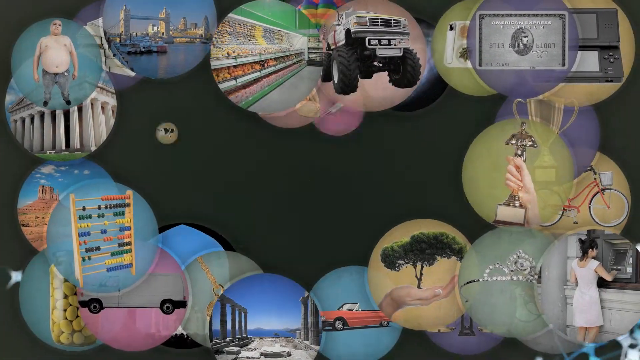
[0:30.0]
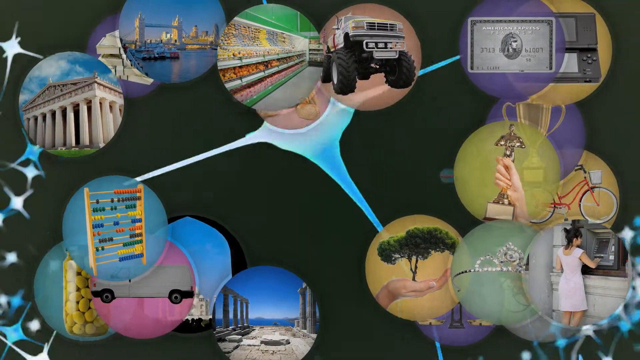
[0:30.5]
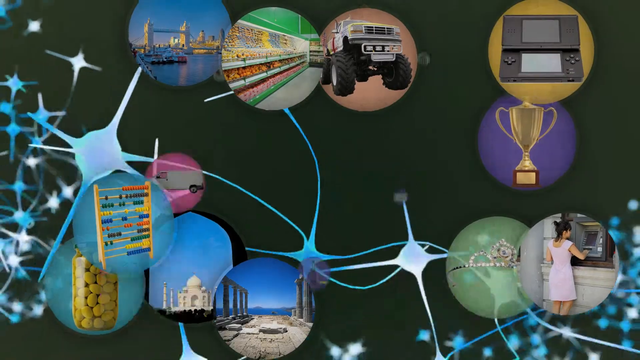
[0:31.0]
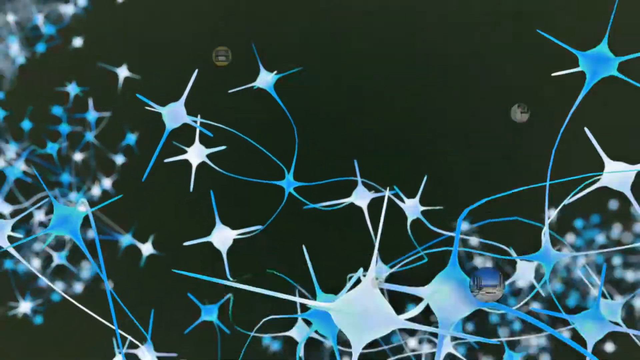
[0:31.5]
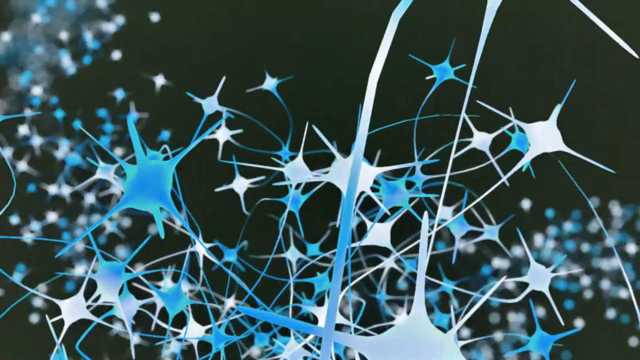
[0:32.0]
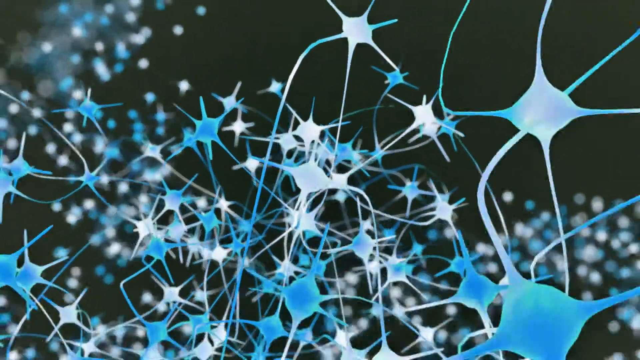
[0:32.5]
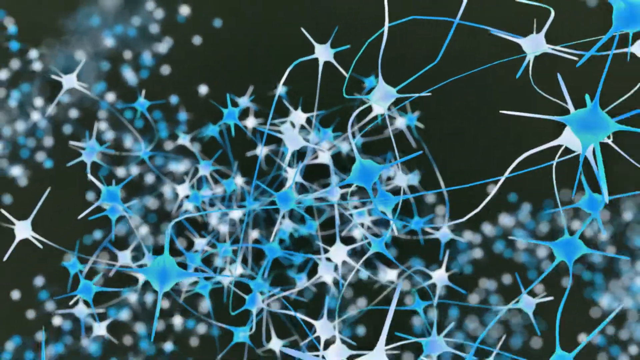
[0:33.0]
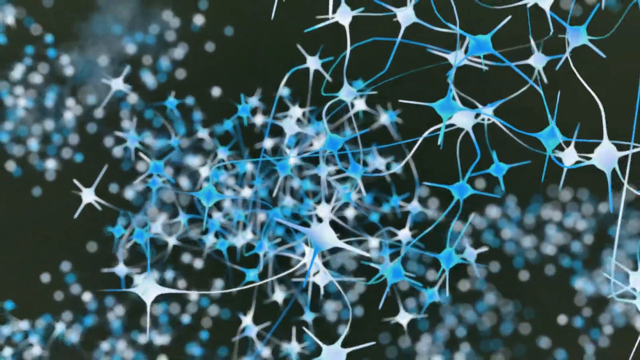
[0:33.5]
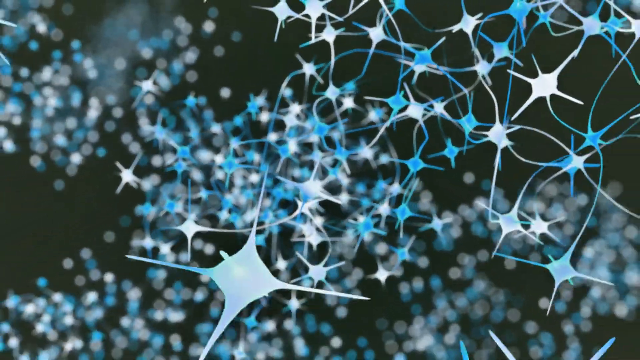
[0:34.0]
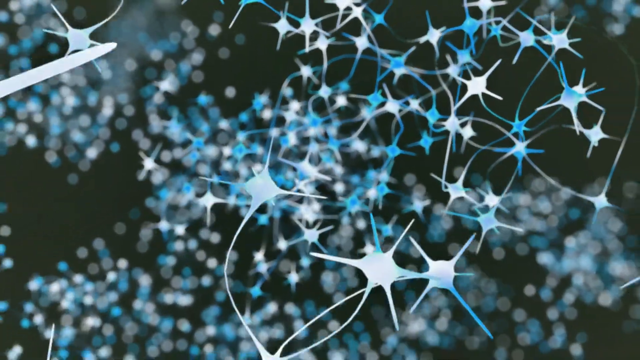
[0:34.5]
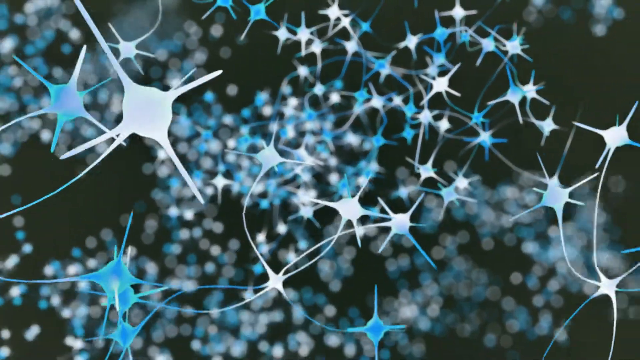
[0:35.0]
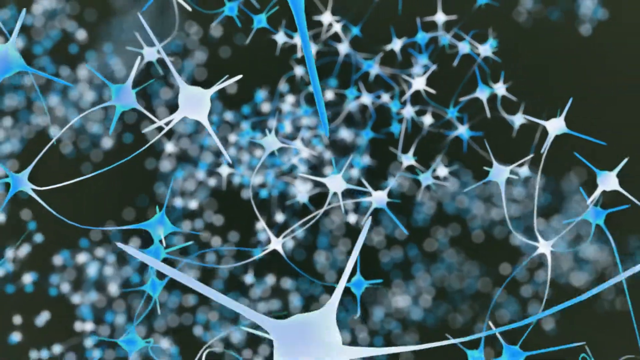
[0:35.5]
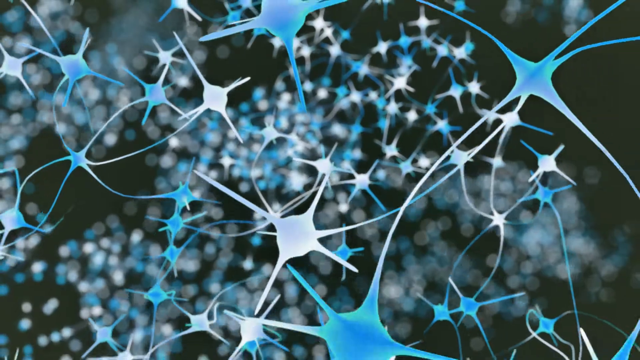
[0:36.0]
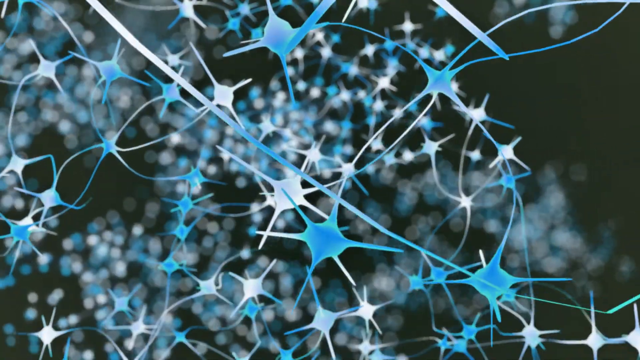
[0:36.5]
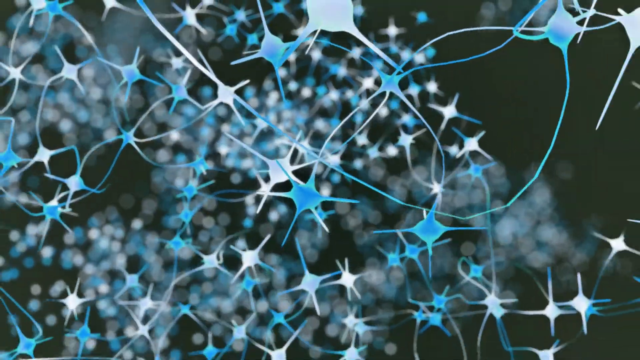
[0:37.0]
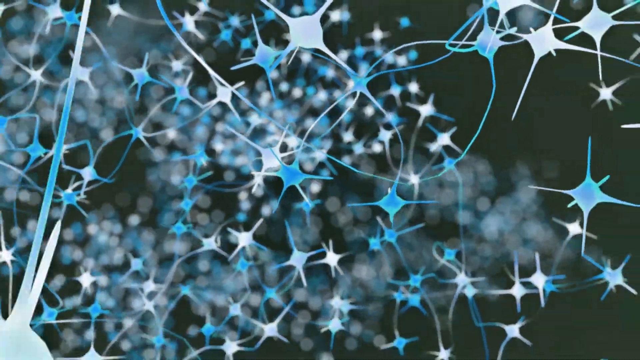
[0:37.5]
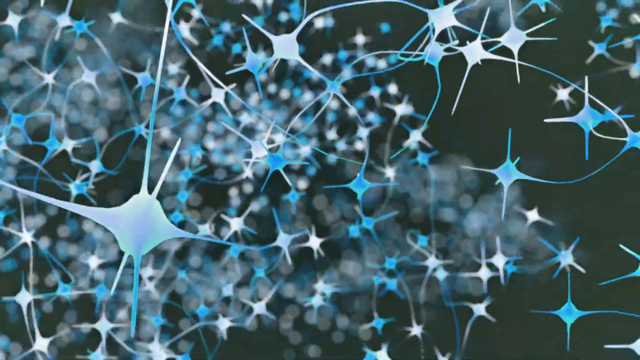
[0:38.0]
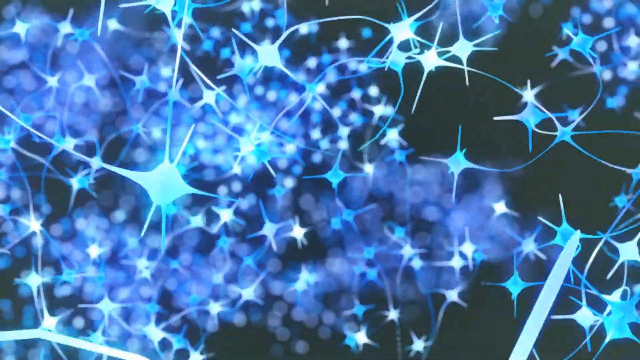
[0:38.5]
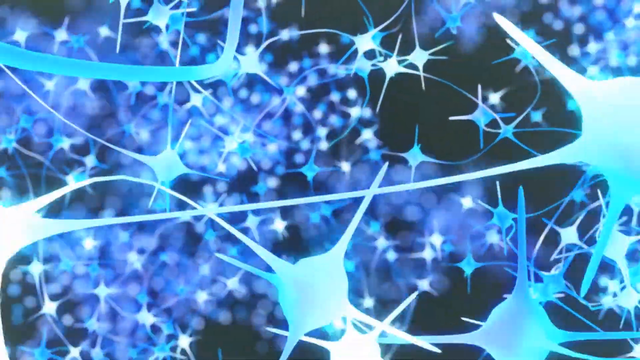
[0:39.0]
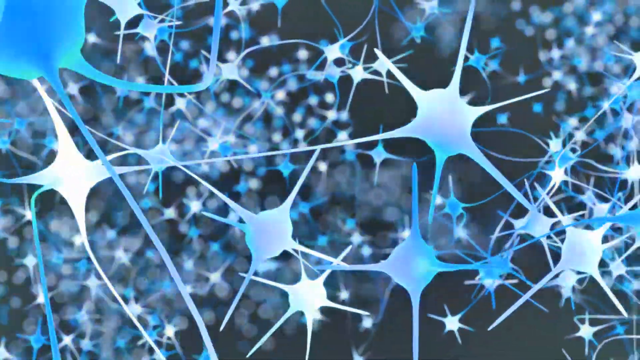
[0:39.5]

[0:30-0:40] The video shows the neurology and the different components of the brain, with ideas synced together. There is a lot of interwebbing and ideas, apparently within a brain, like a person's thoughts or feelings.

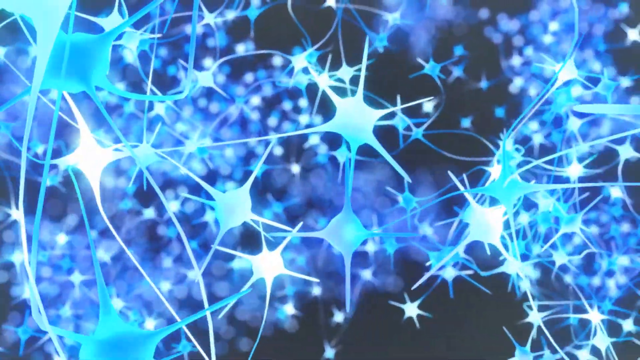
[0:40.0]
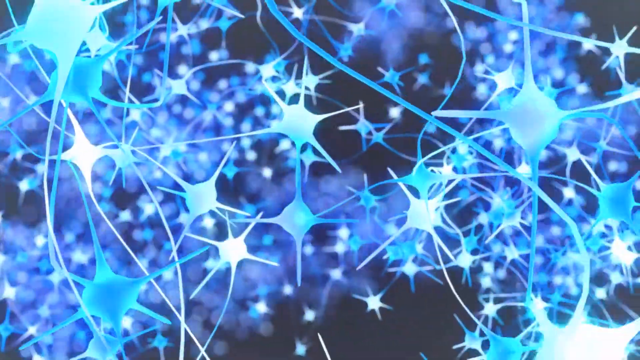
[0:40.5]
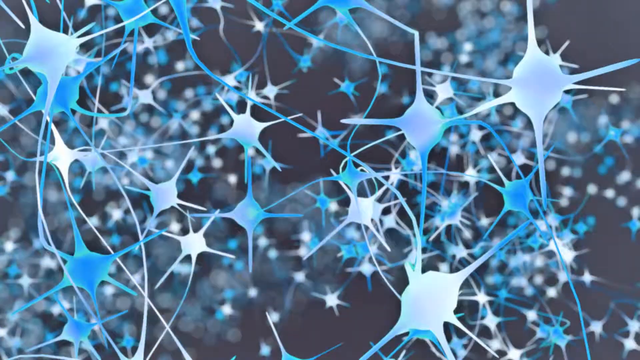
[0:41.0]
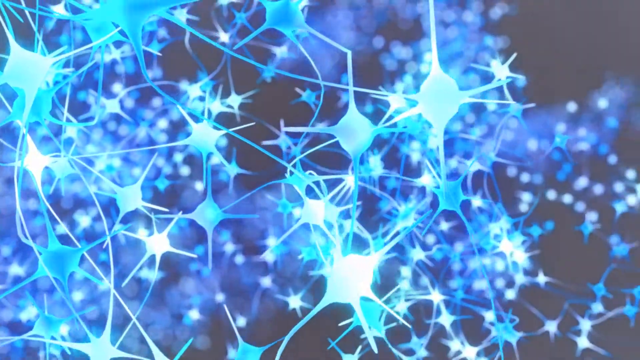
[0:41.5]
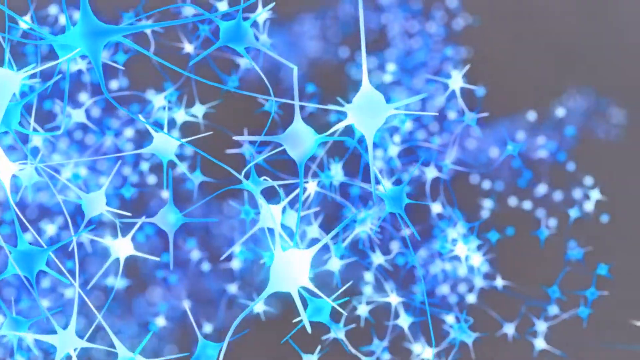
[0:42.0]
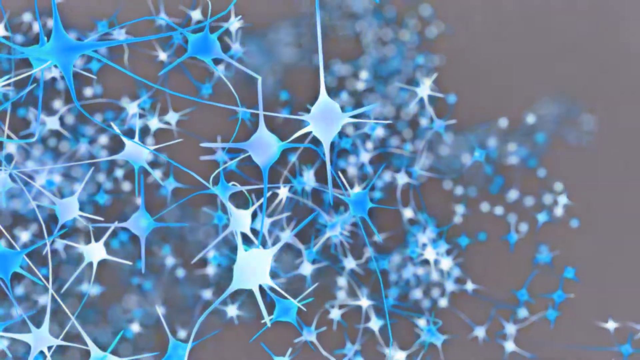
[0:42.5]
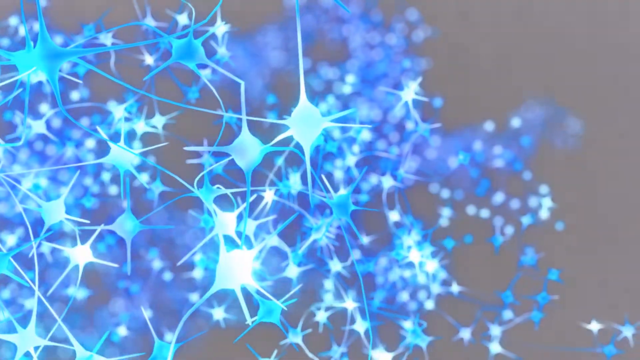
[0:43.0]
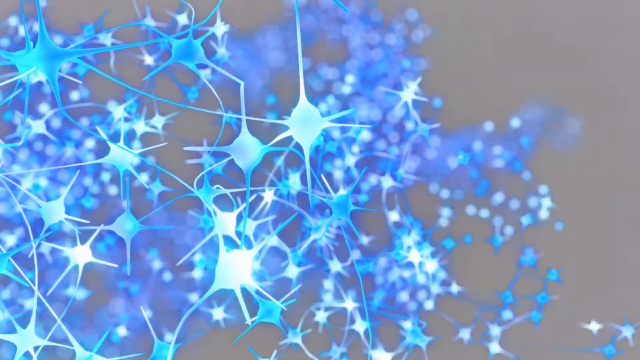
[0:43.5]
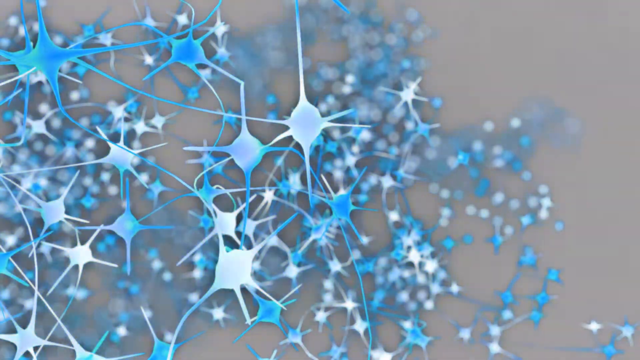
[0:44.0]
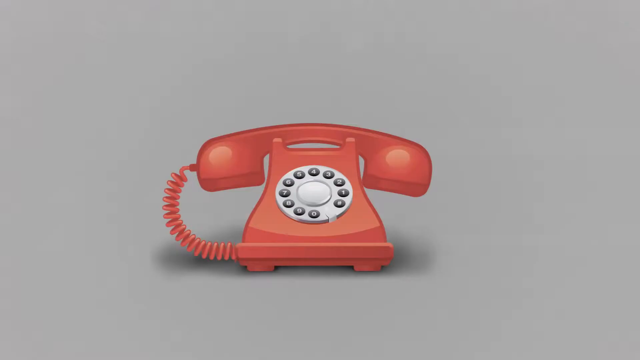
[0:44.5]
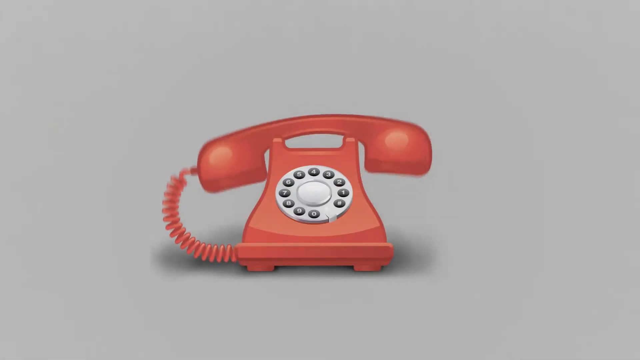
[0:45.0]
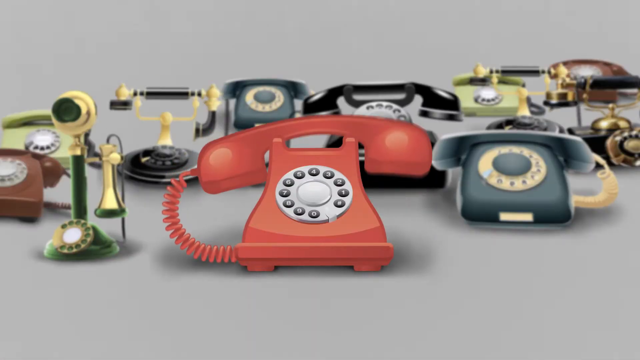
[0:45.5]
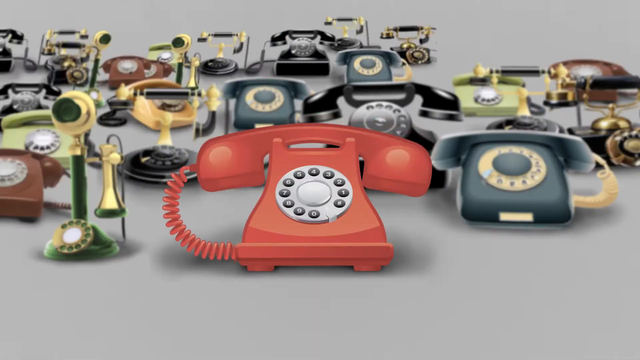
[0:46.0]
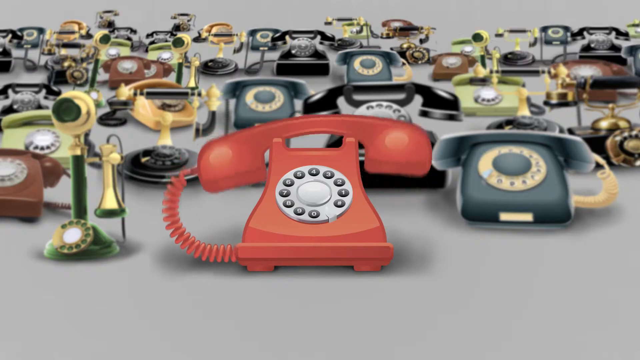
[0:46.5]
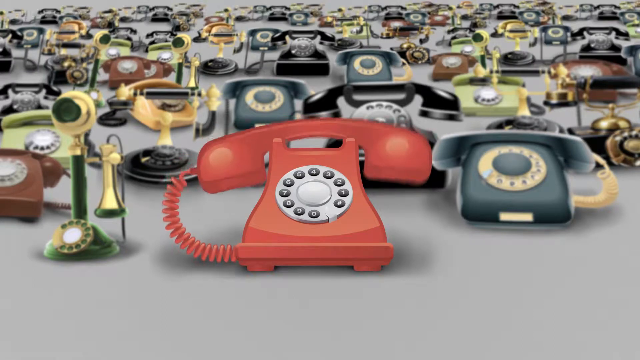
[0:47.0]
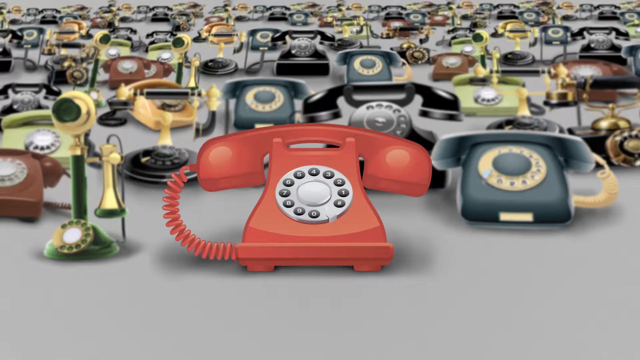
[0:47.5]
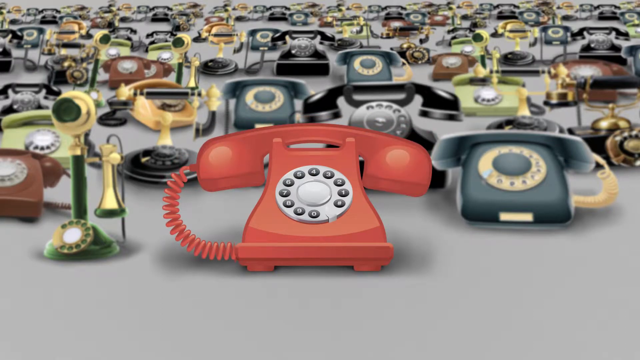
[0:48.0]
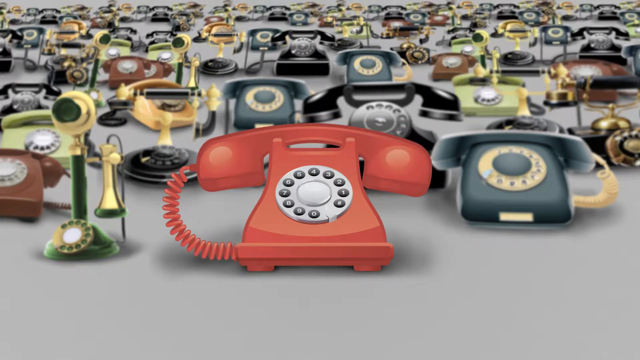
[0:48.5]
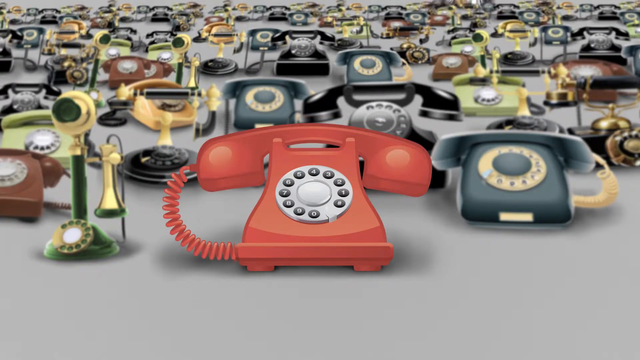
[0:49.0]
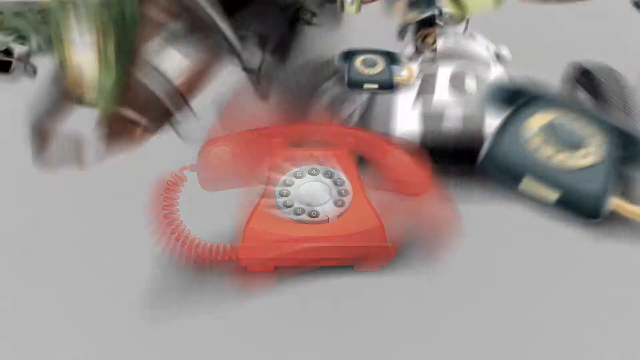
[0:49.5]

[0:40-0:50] Neurons pulse, and the imagery shows some type of crash or anxiety. The theme looks like stimulation, with lots of neurons and sharp, spiky-looking objects of the kind that connect thoughts and reactions within a brain.